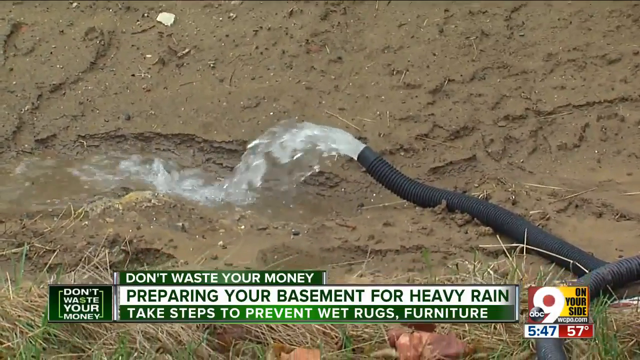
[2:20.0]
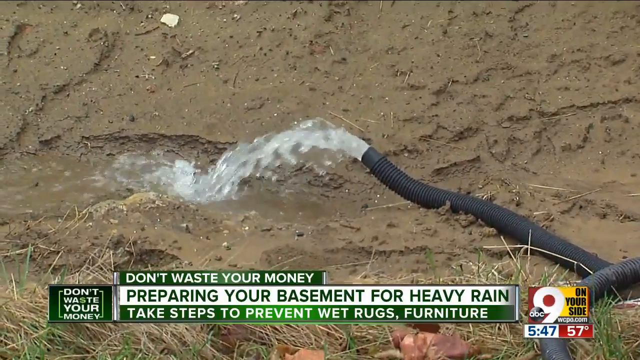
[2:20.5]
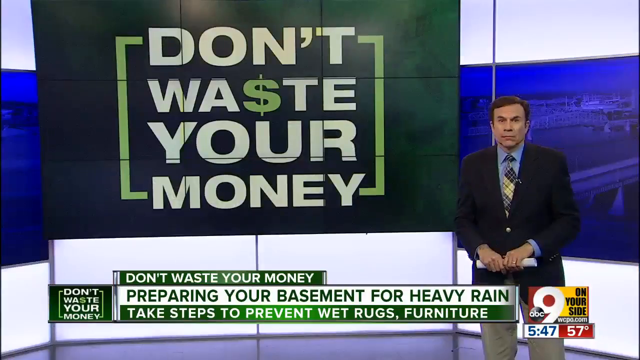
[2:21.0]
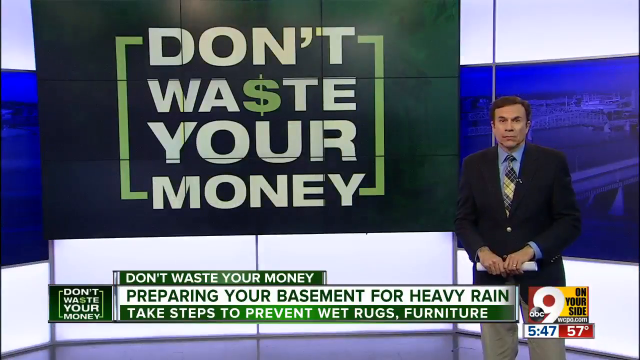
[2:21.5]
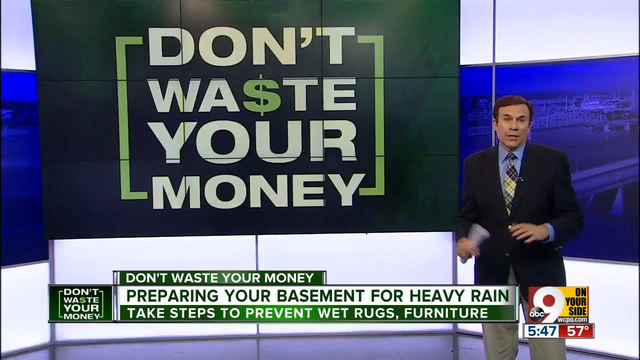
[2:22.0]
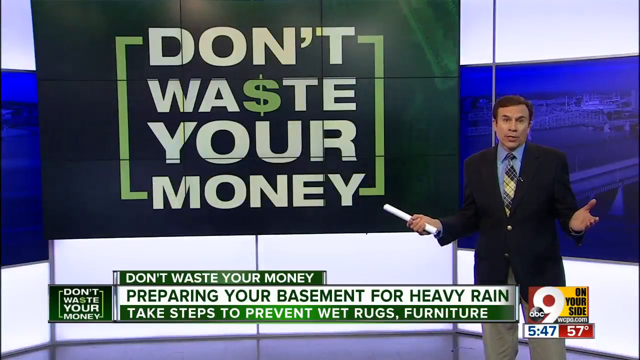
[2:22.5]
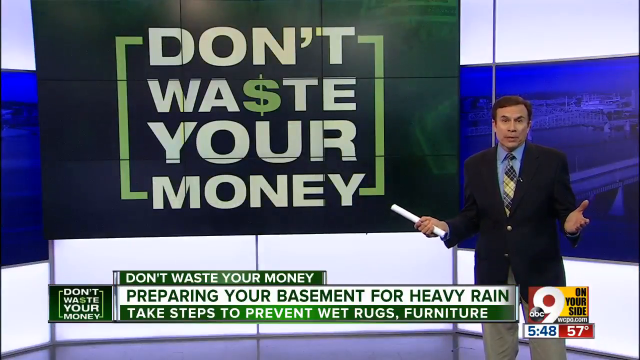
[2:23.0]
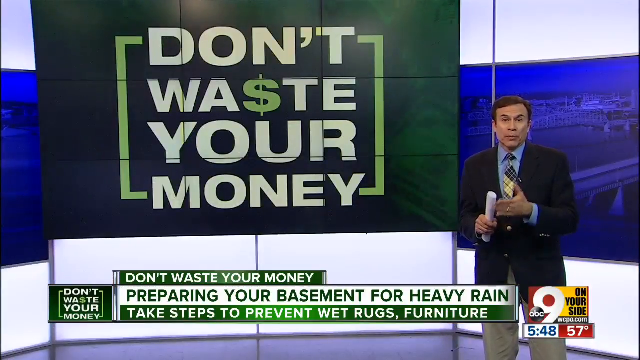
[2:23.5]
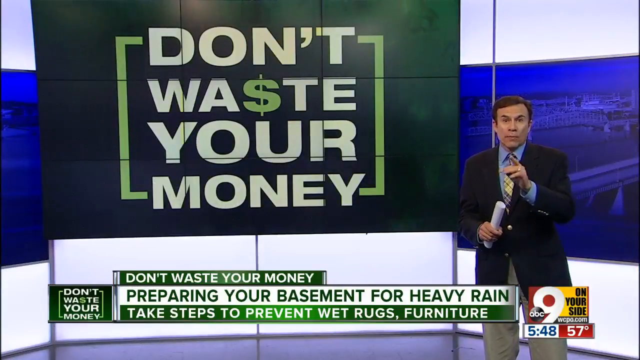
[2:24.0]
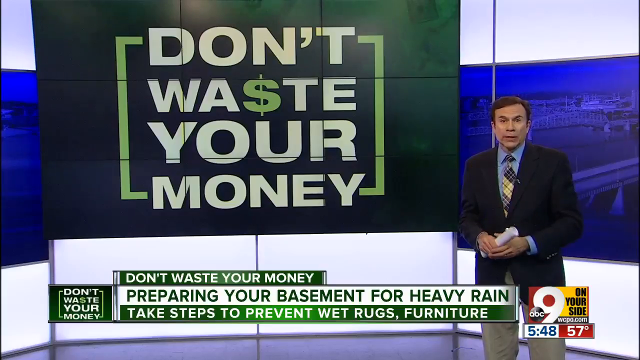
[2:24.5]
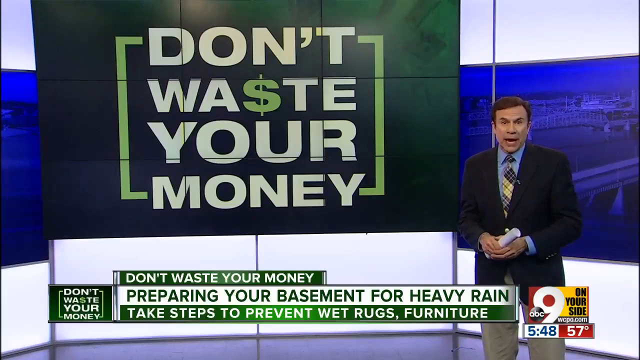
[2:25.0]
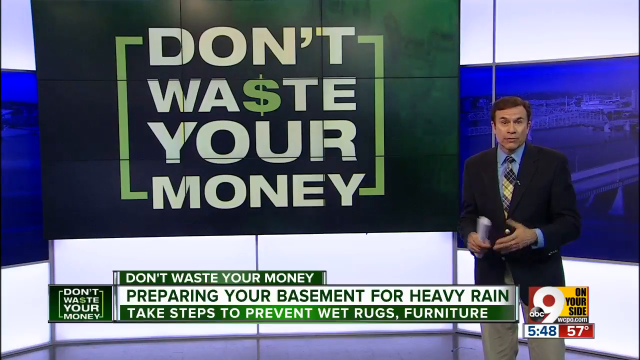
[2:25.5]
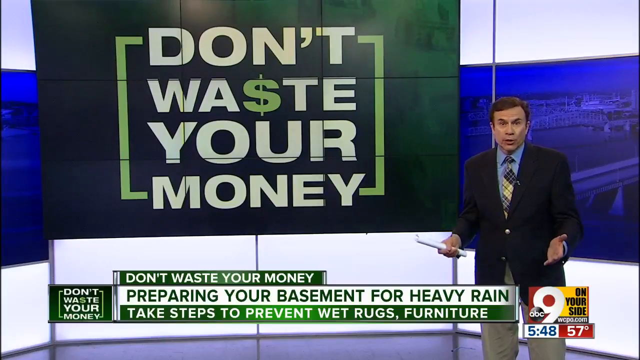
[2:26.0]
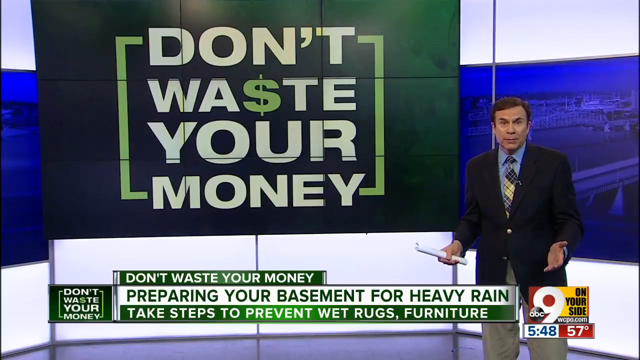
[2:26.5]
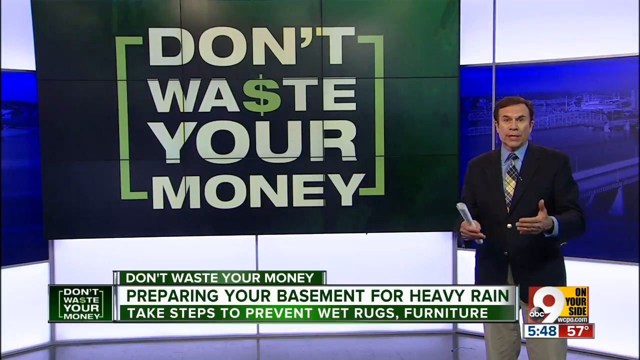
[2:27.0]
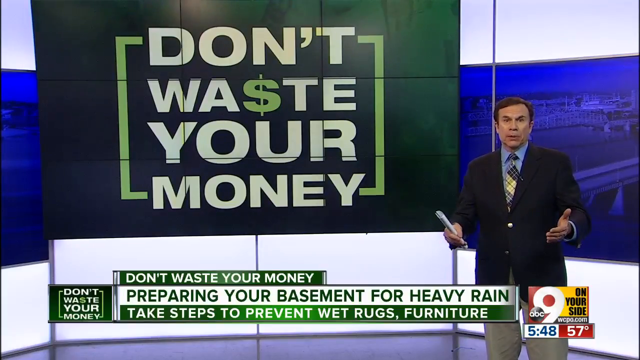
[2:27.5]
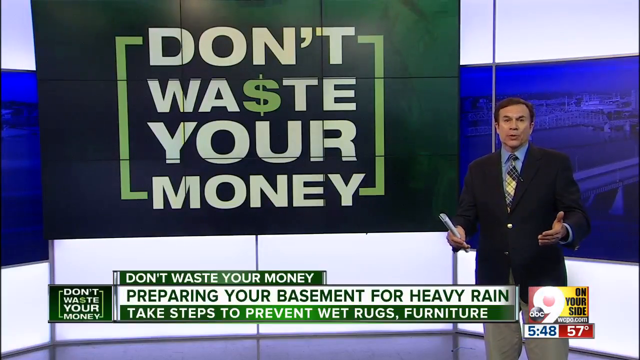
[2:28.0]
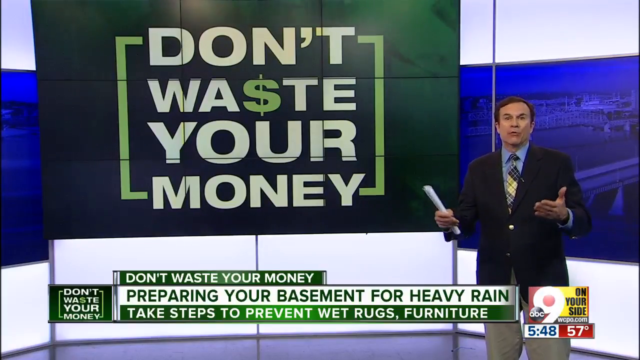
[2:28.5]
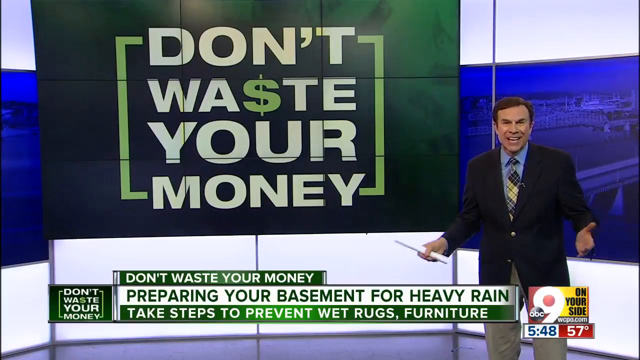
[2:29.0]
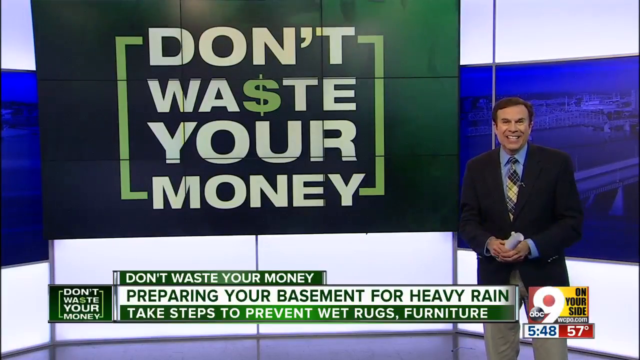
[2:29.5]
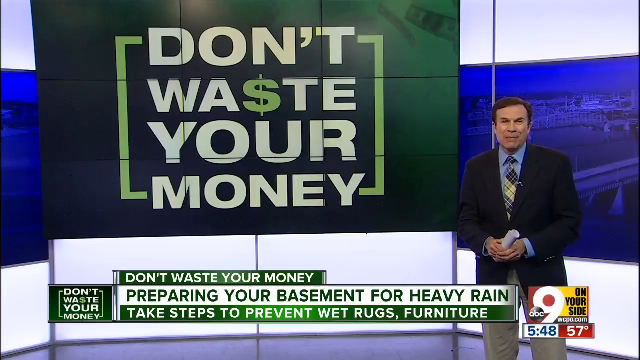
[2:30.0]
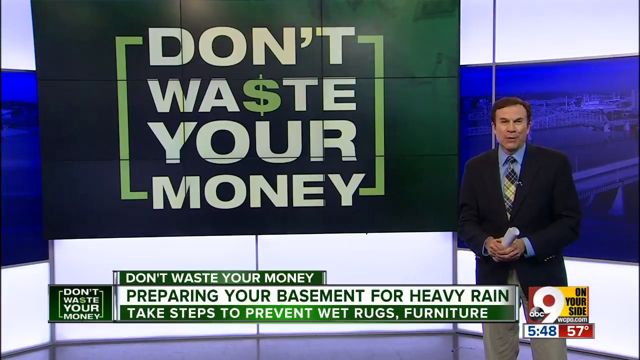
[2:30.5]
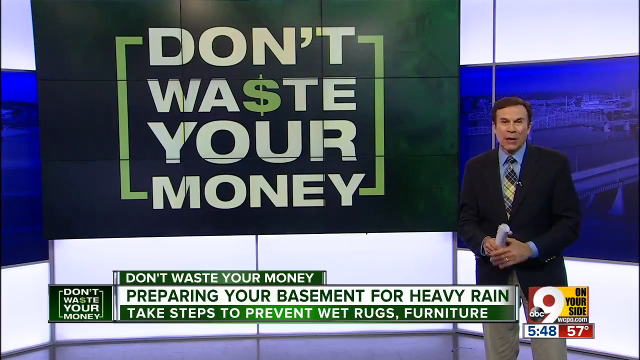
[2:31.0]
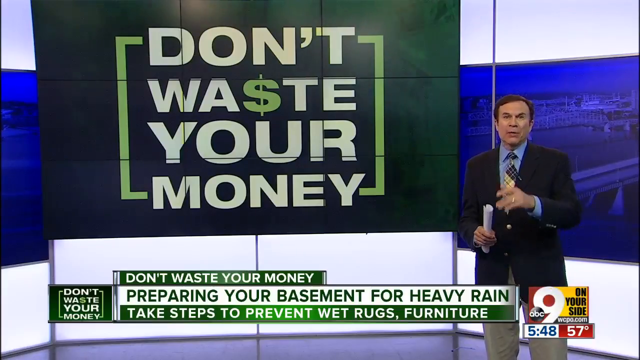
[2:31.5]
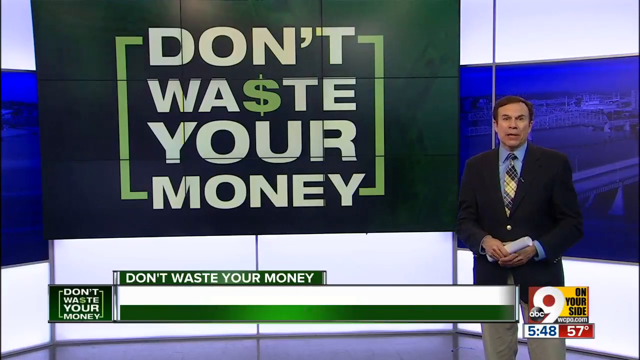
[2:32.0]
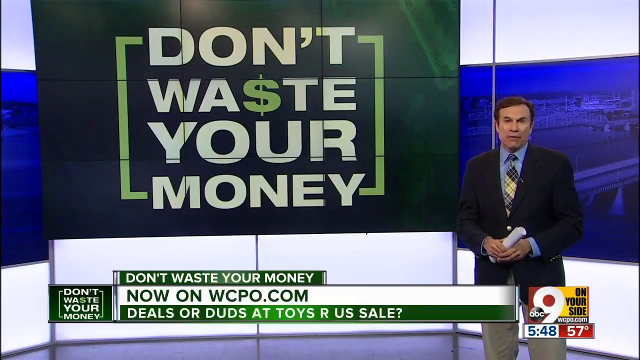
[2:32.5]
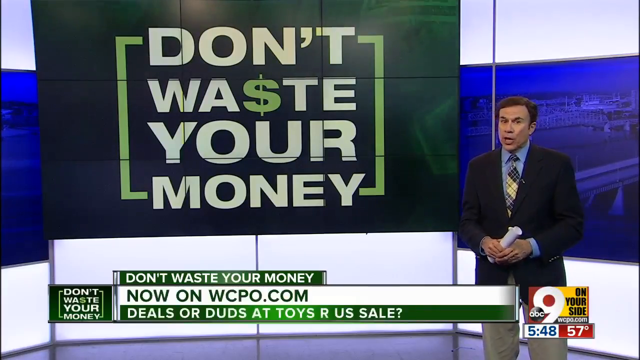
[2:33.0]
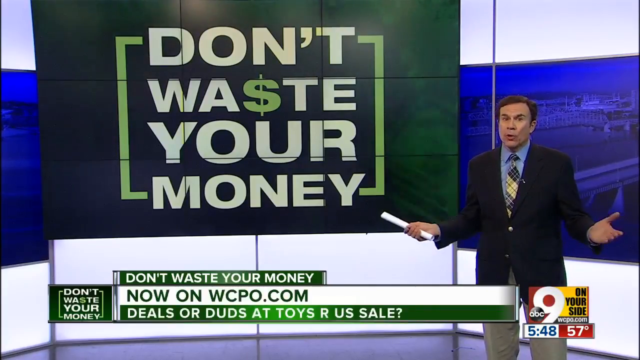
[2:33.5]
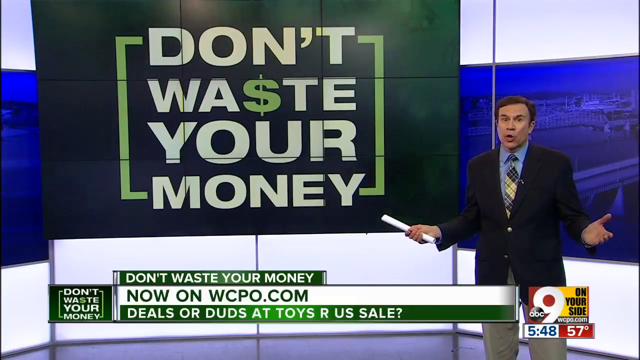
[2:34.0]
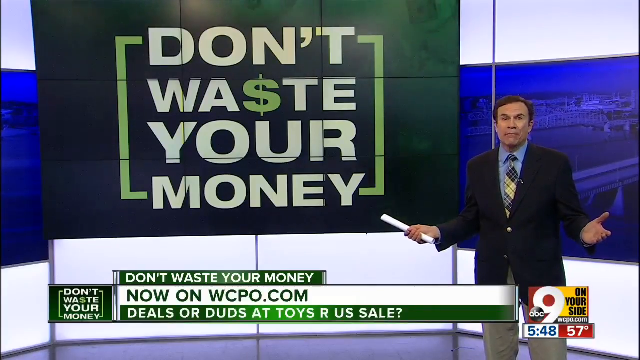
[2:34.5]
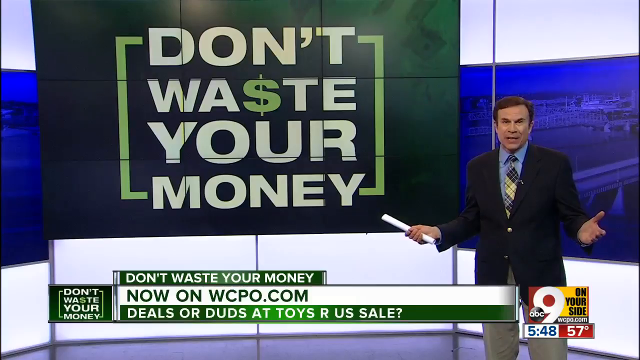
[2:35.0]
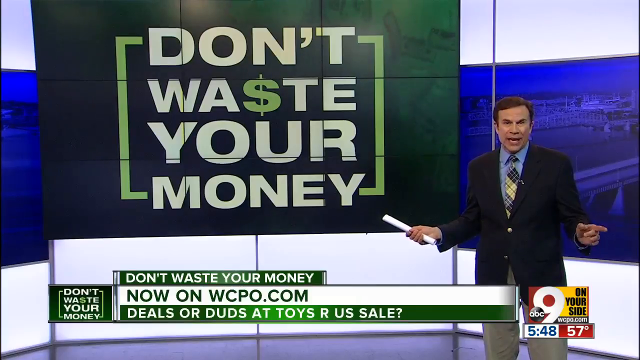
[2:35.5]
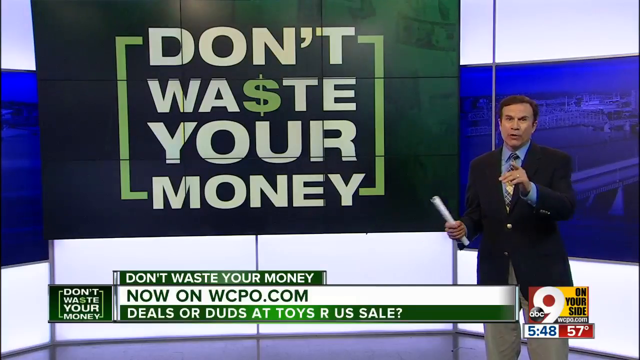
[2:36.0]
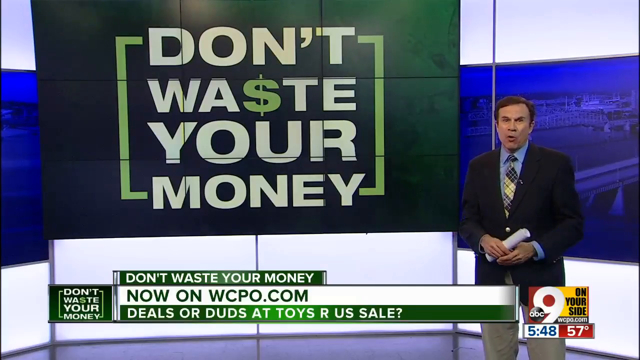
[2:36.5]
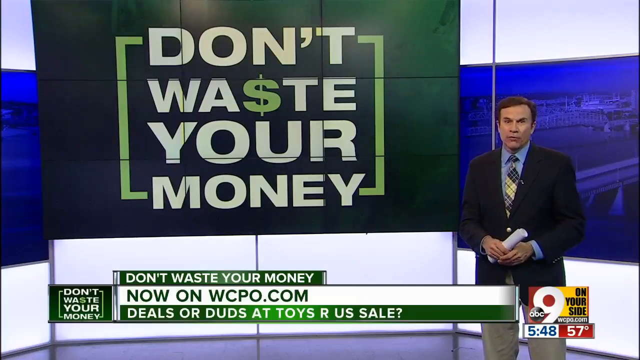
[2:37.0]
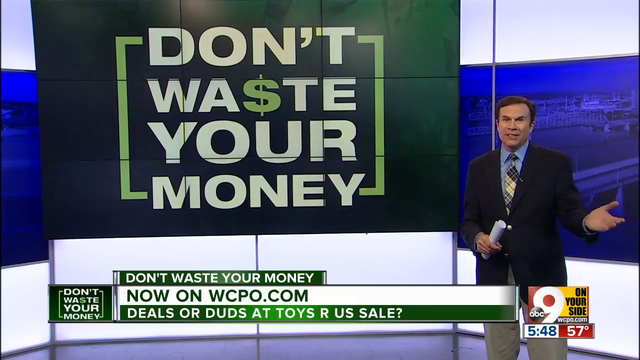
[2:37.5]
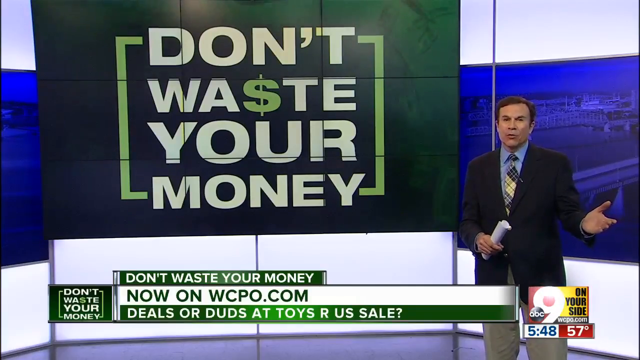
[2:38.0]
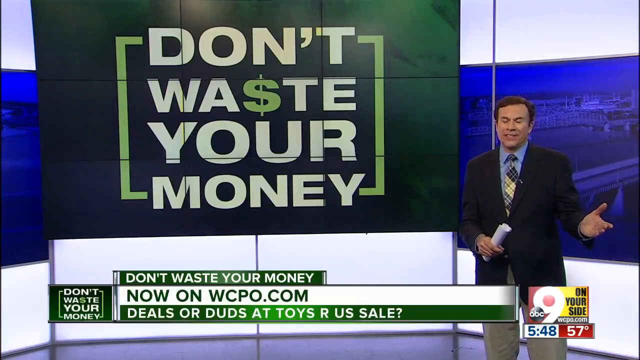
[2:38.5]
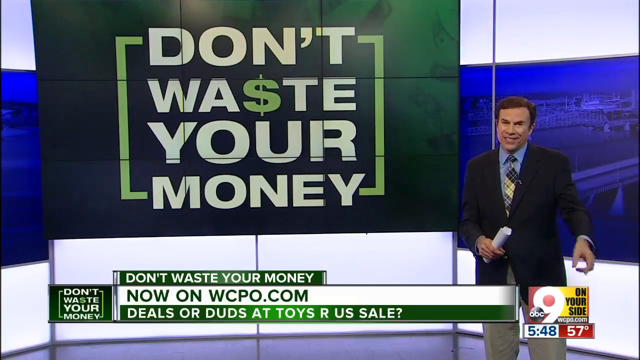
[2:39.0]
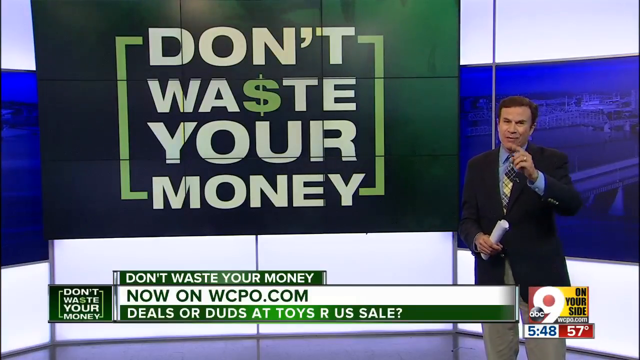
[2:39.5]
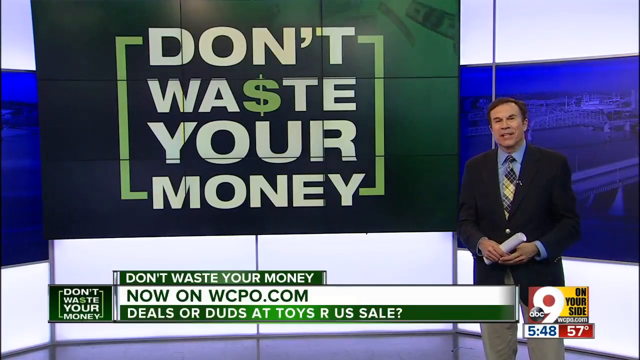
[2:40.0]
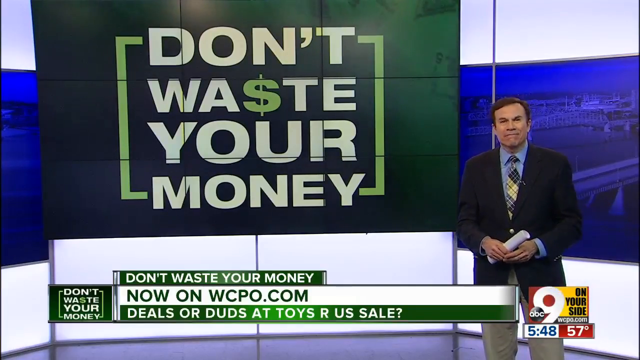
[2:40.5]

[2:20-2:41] A black hose sprays flood water pumped from a basement, creating a channel in the dirt that presumably leads to a drain or a ditch. The Channel 9 News story shows "don't waste your money" as the top story, along with "preparing your basement for heavy rainfall" and "take steps to prevent wet rugs and furniture." The broadcast then cuts back to the newsroom, where a reporter stands with a rolled-up paper in his hand. He wears a black suit, a blue button-up shirt, and a very gaudy multicolored tie. The S in the word "waste" in Don't Waste Your Money is a dollar sign. The man moves his hands around frenetically as he tries to get his point across. A headline then says "now on WCPO.com deals or duds at Toys R Us sale," also part of the Don't Waste Your Money series on Channel 9 News.